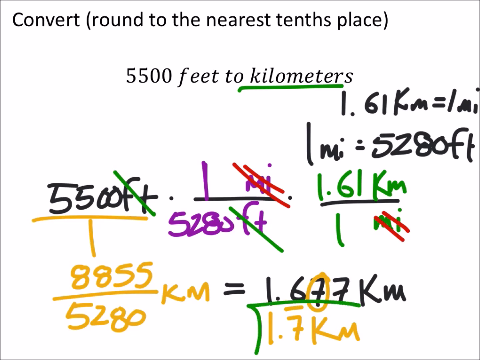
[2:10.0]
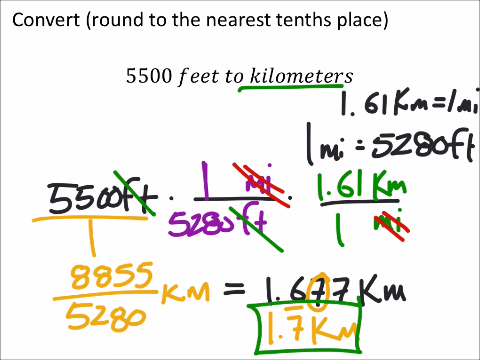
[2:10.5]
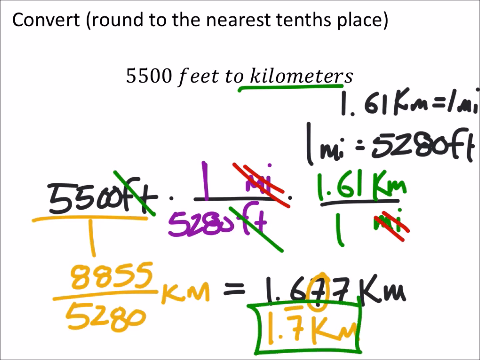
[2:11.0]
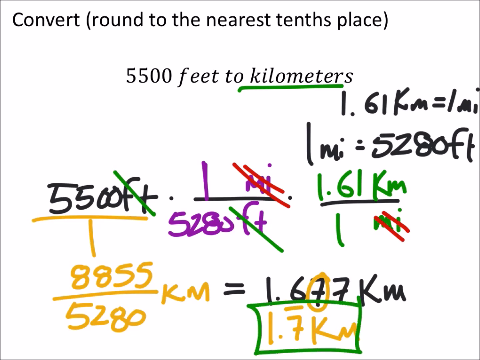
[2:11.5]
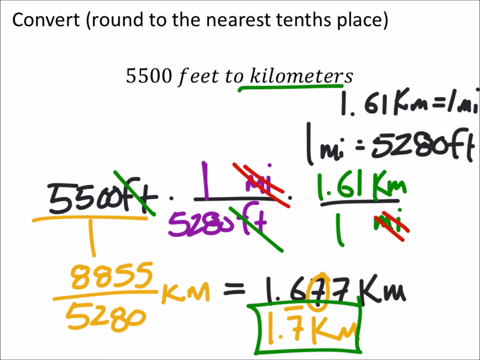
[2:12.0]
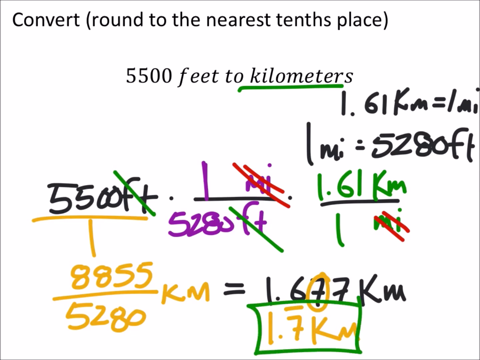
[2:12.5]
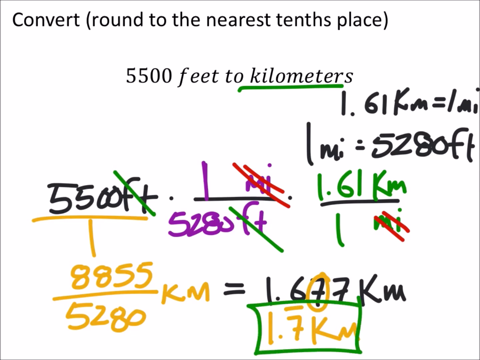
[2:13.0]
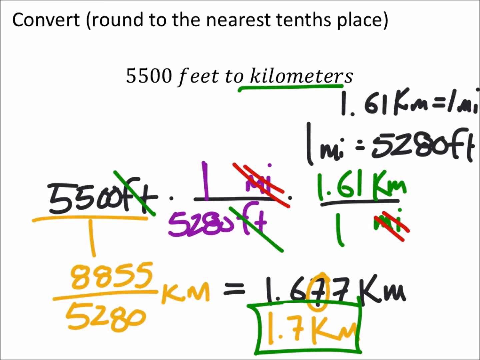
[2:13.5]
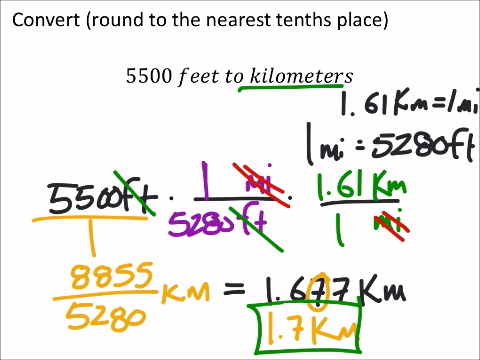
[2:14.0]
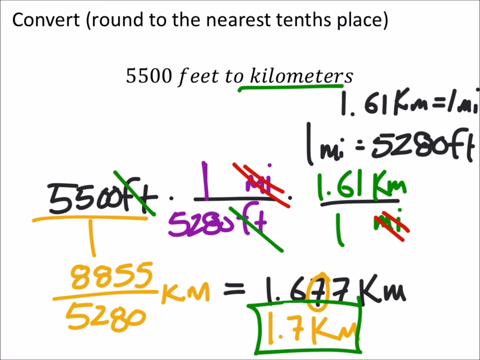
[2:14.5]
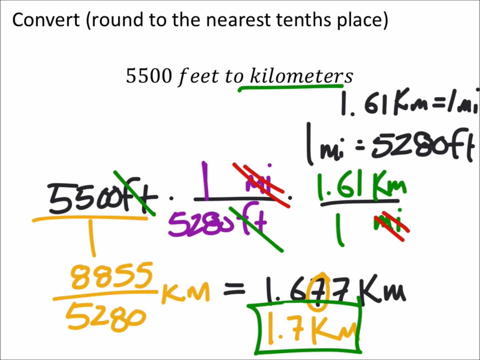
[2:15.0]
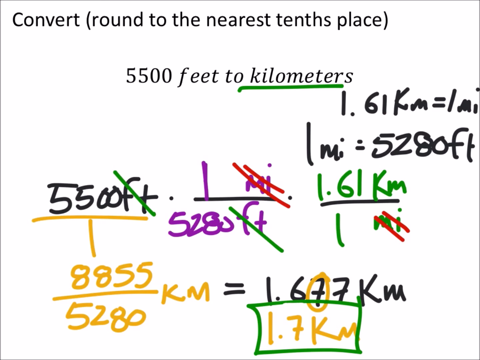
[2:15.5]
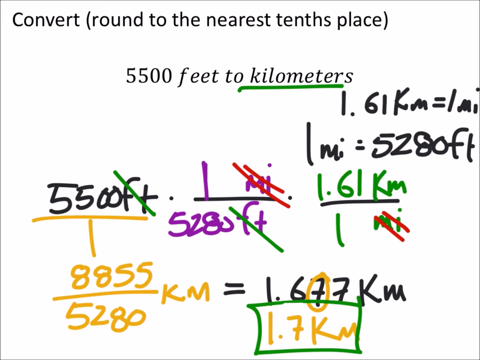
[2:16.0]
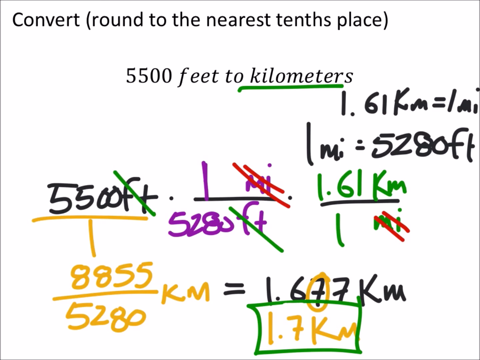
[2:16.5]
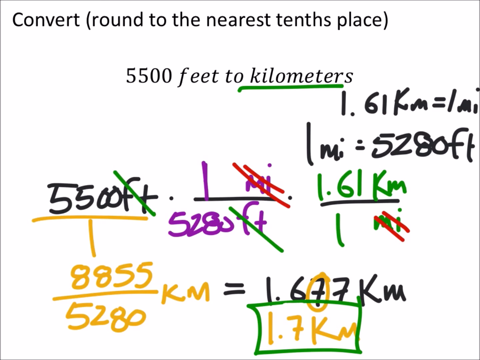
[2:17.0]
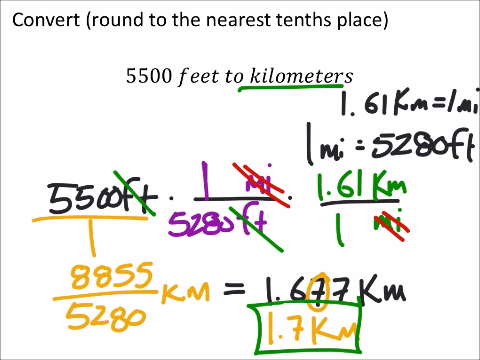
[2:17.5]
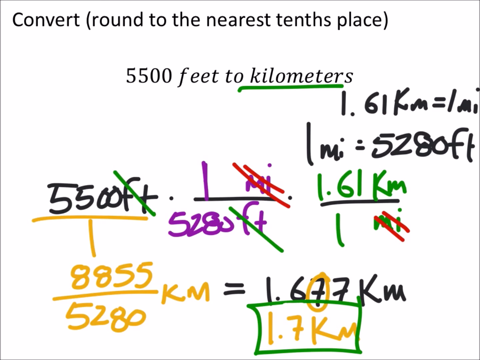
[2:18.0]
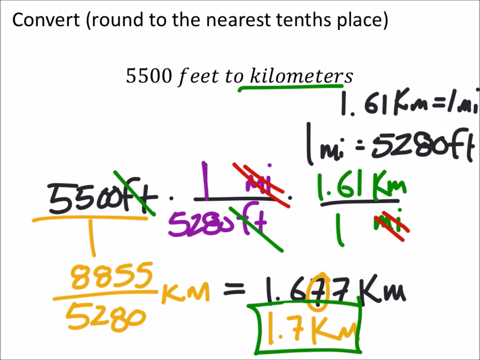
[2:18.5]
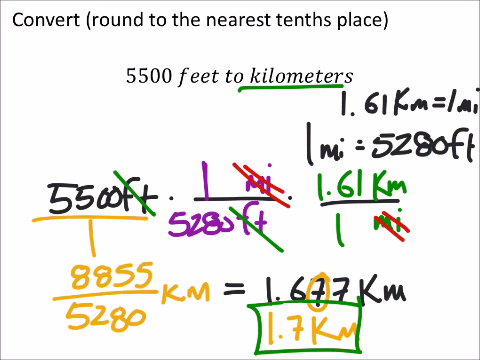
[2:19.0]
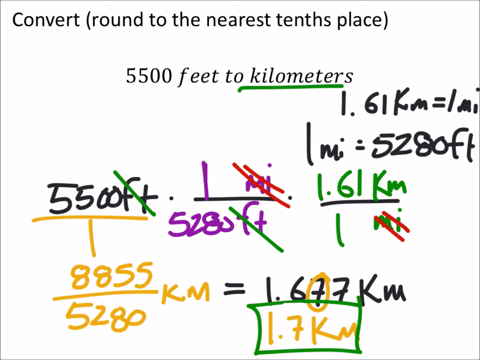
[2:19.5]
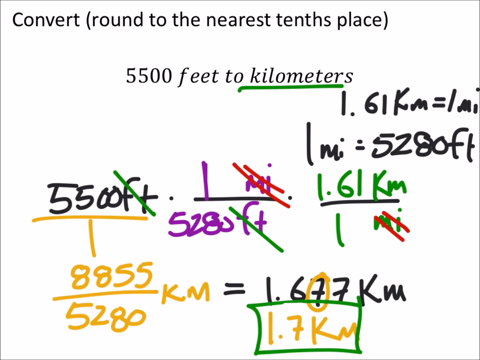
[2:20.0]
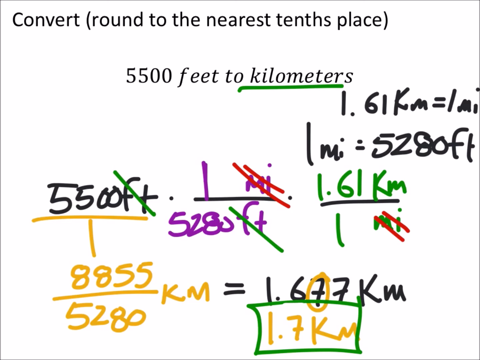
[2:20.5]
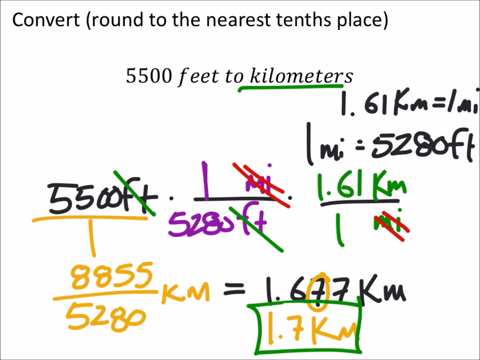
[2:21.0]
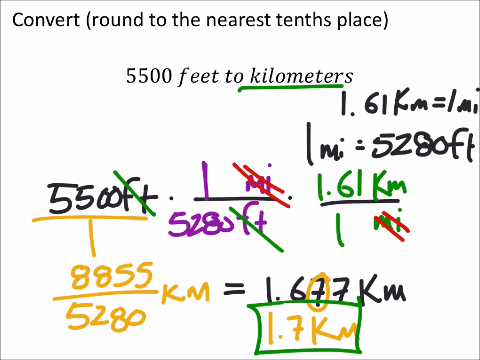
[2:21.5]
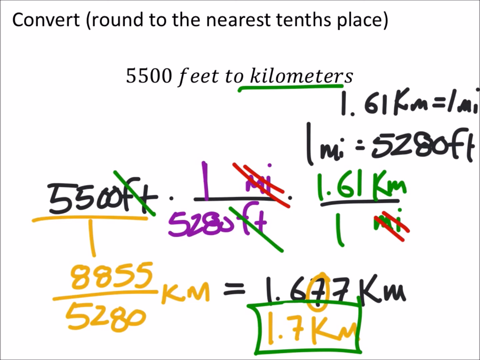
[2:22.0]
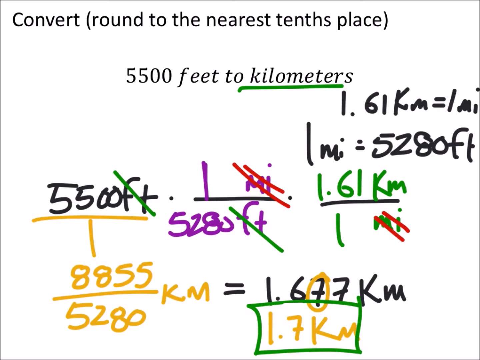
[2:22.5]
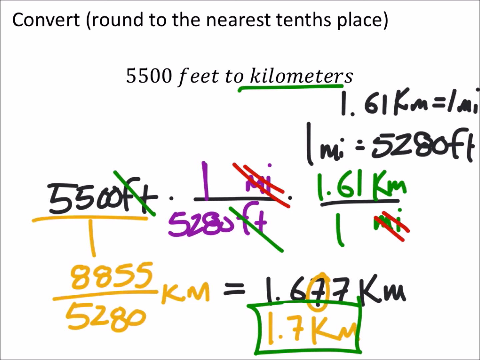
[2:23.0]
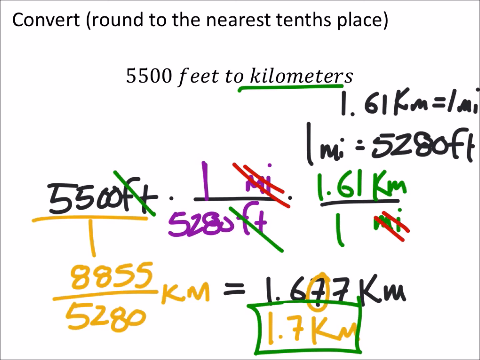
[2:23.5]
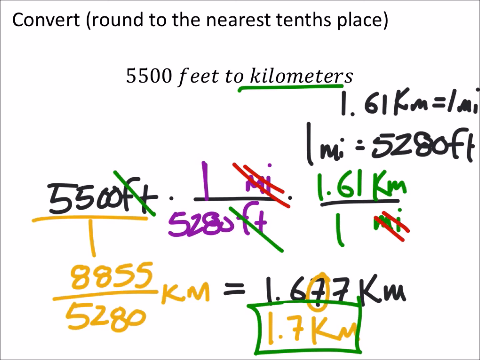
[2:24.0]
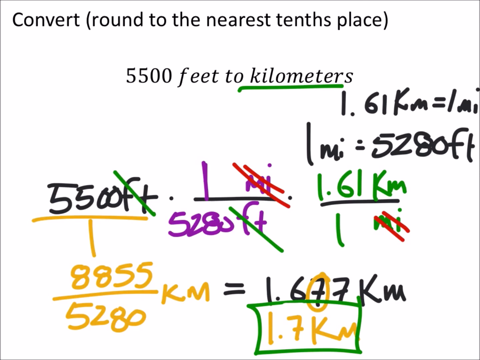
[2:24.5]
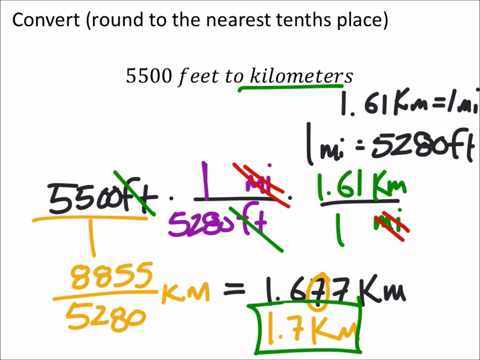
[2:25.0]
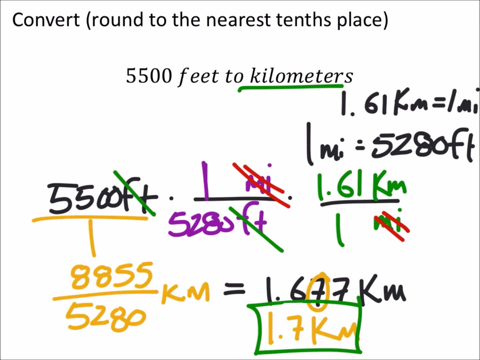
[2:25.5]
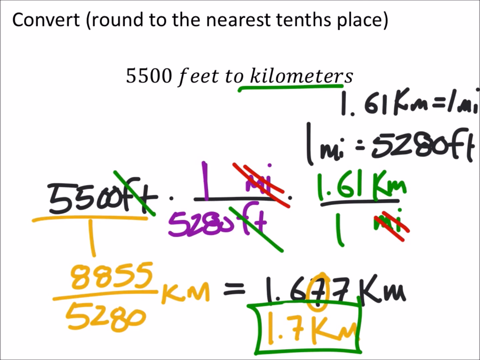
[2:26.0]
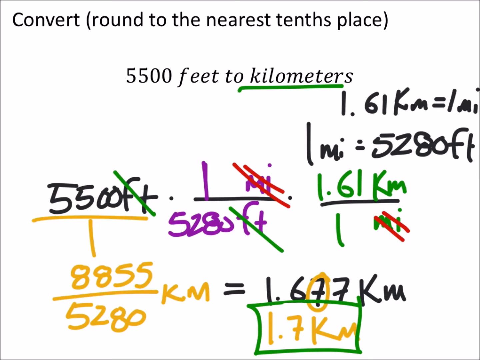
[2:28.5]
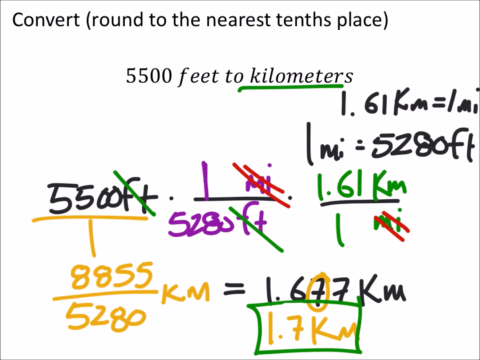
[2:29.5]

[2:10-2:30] A table drawn under the 5,500 feet gives a breakdown of 8,855 km divided by 5,290 km as equal to 1.677 km. Another table drawn on the figure shows 1.7 km.